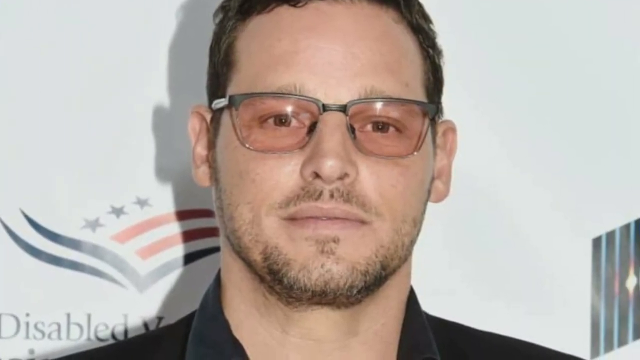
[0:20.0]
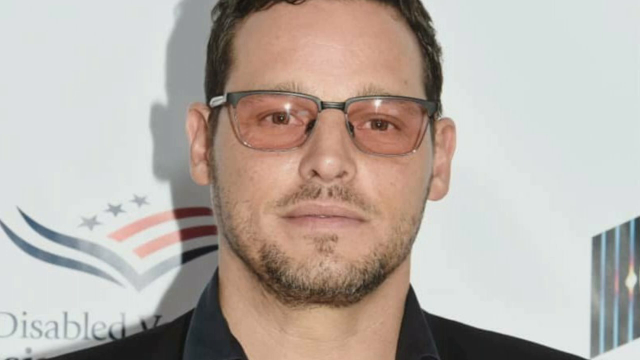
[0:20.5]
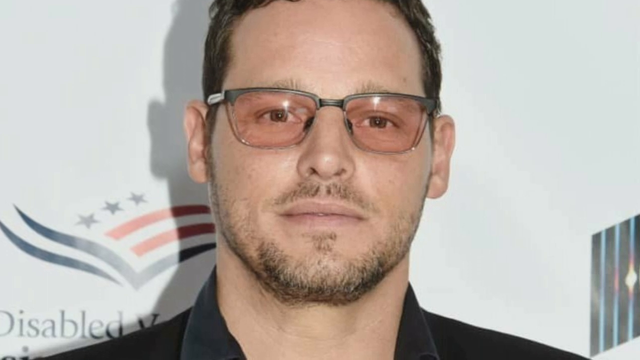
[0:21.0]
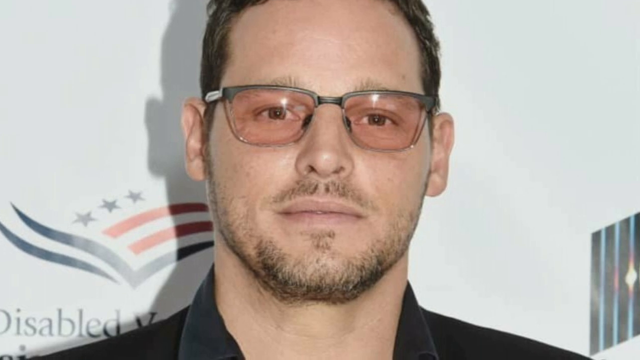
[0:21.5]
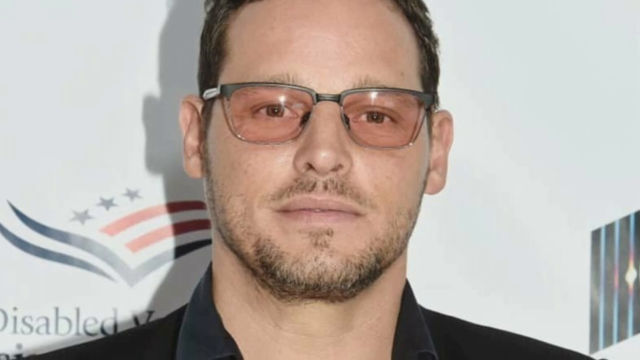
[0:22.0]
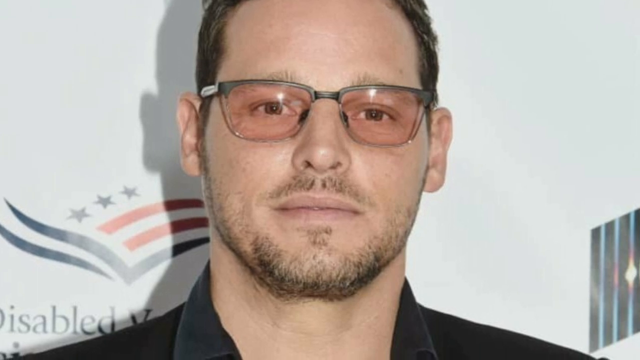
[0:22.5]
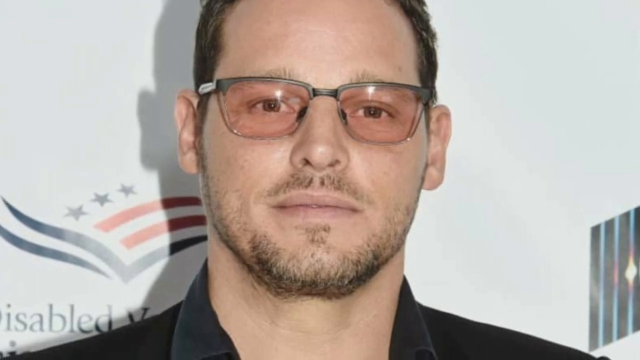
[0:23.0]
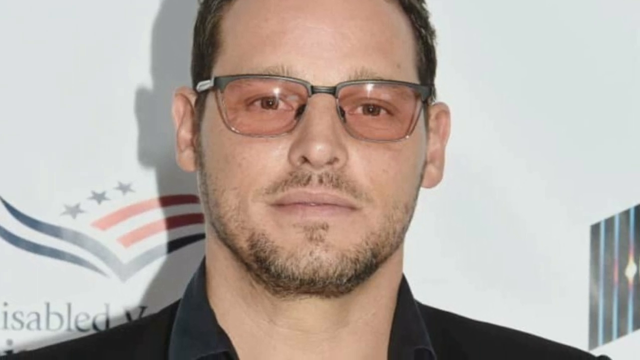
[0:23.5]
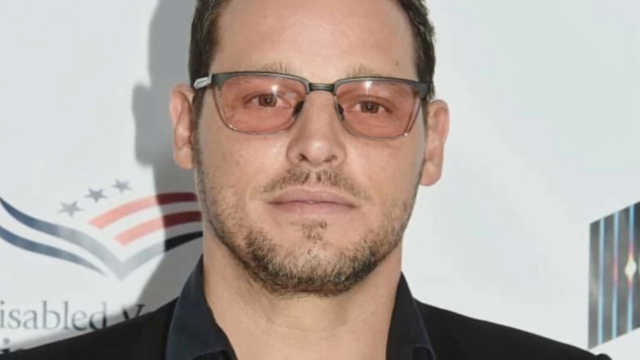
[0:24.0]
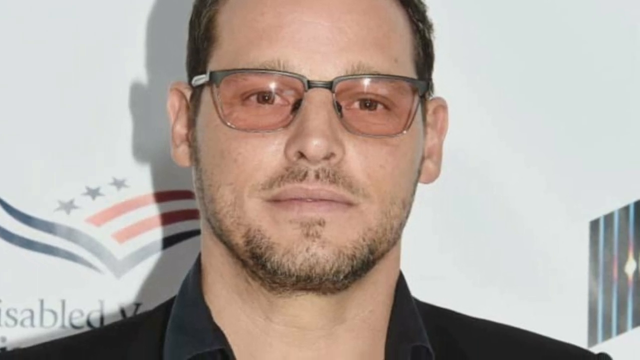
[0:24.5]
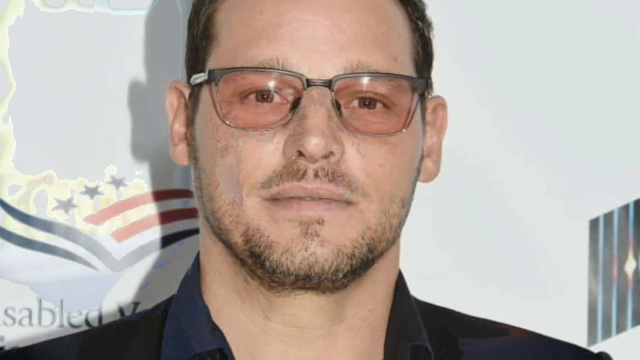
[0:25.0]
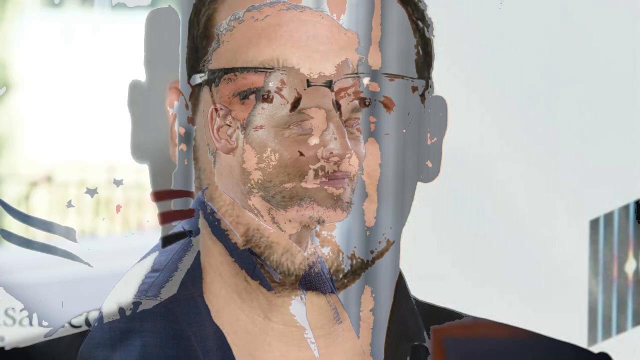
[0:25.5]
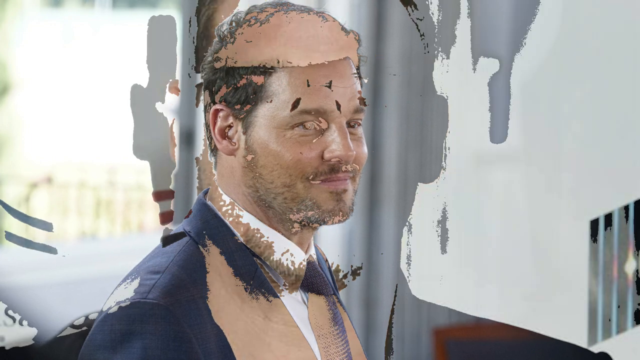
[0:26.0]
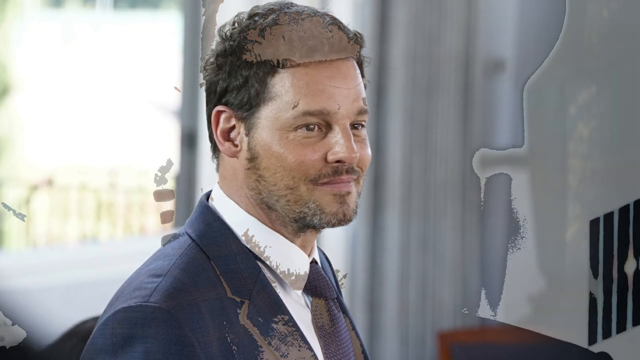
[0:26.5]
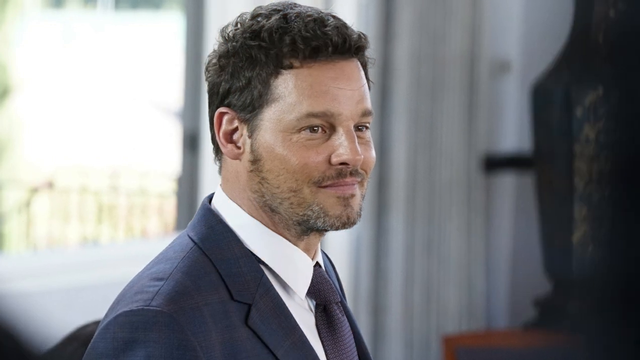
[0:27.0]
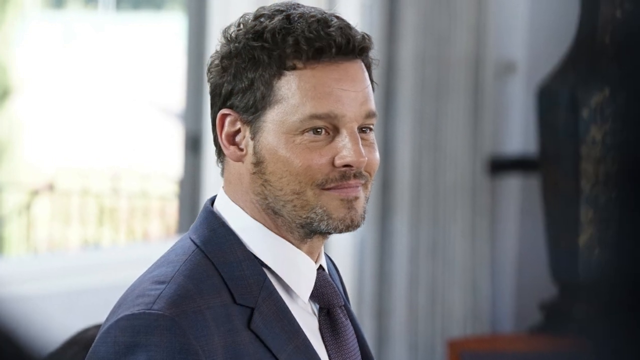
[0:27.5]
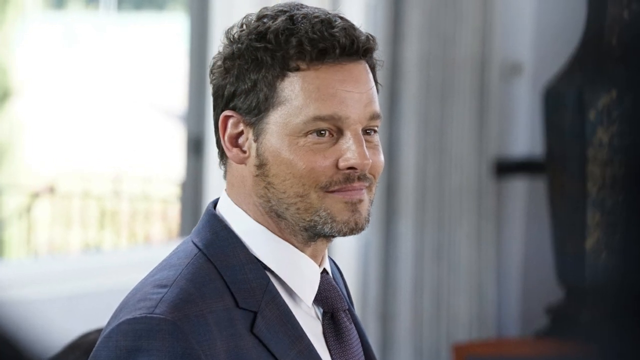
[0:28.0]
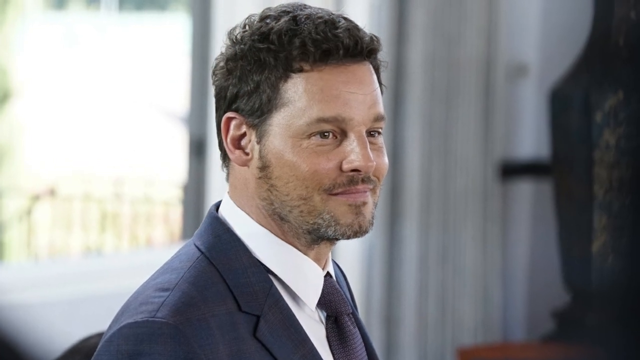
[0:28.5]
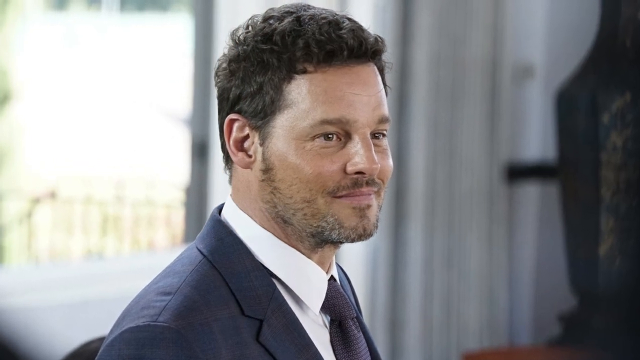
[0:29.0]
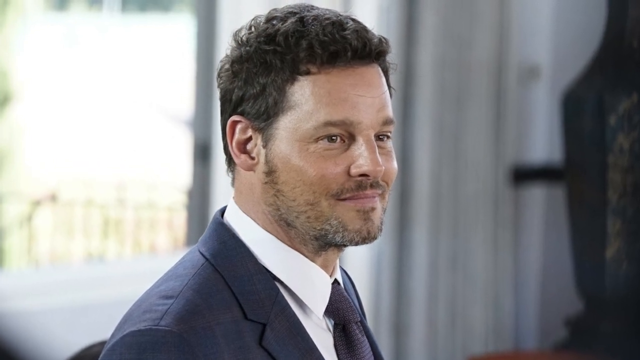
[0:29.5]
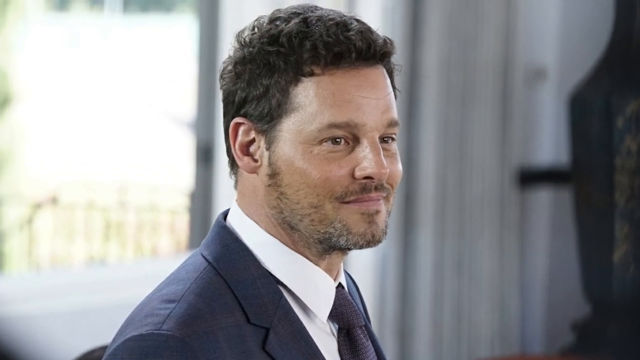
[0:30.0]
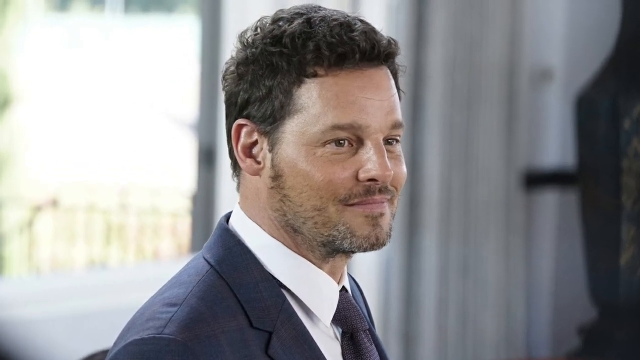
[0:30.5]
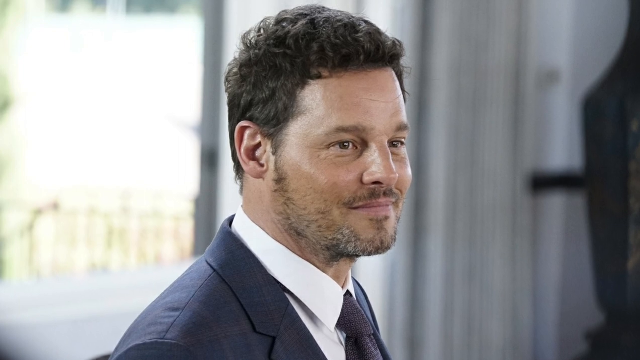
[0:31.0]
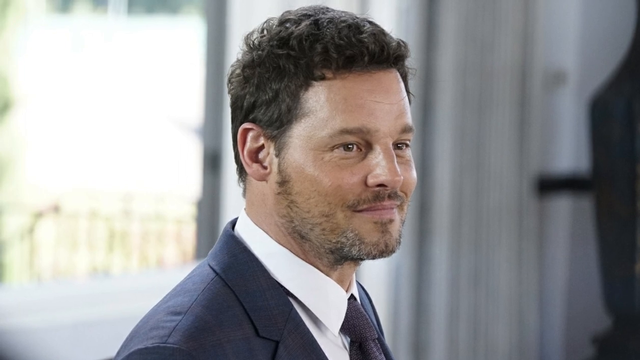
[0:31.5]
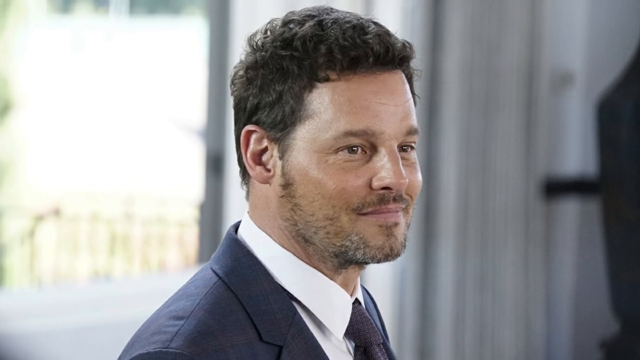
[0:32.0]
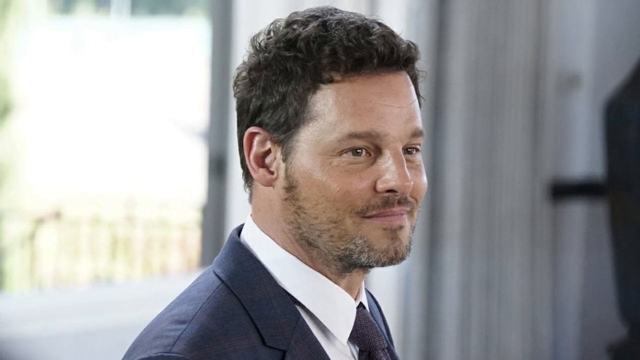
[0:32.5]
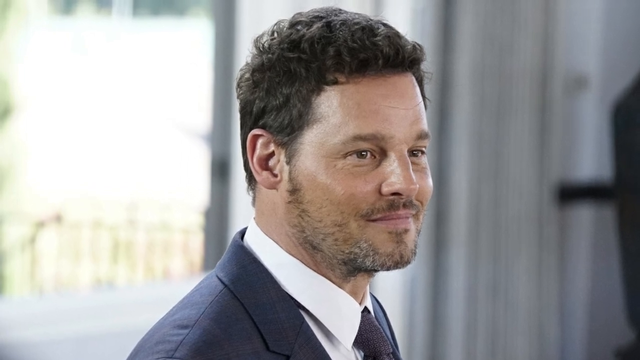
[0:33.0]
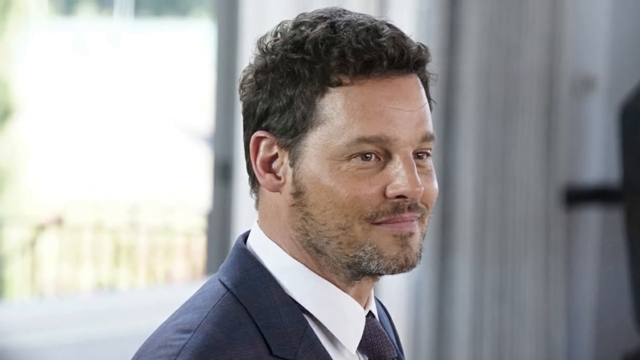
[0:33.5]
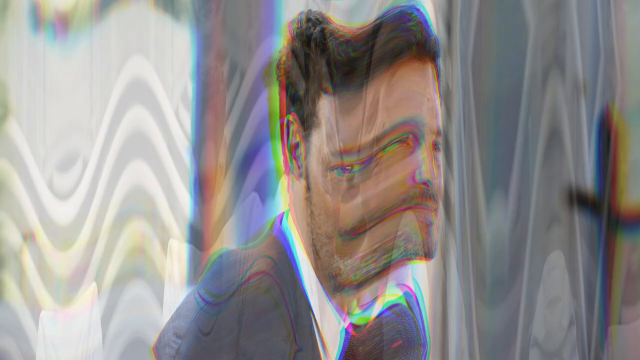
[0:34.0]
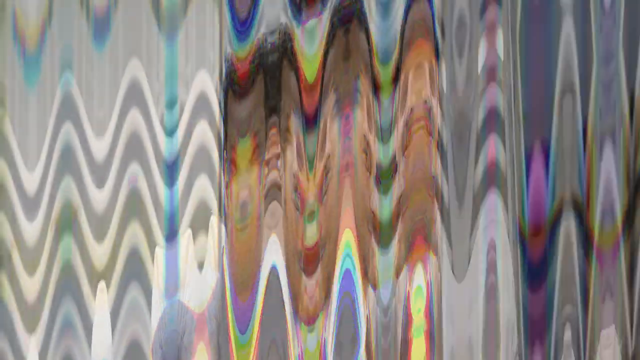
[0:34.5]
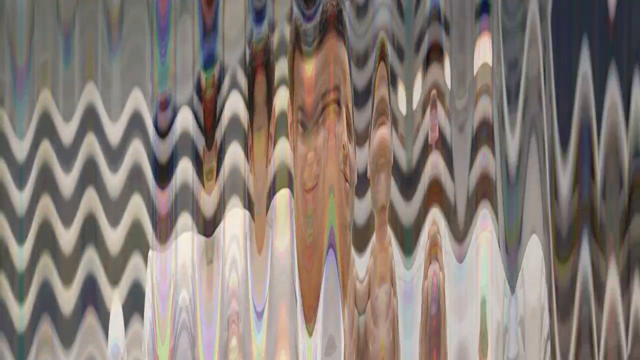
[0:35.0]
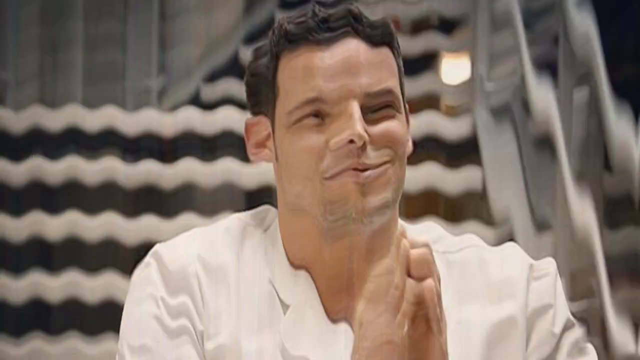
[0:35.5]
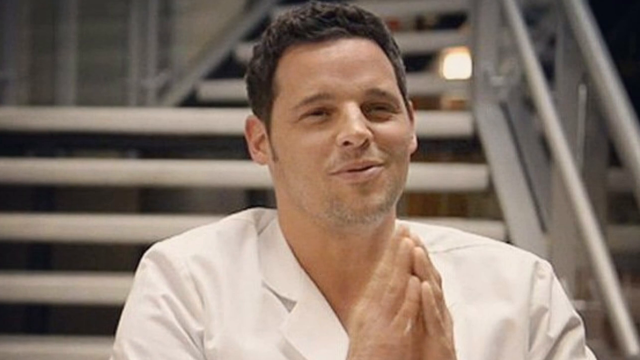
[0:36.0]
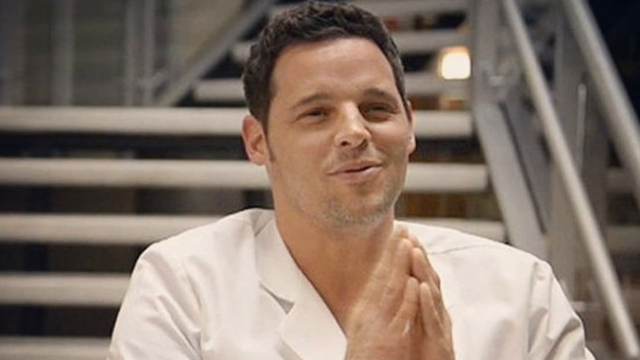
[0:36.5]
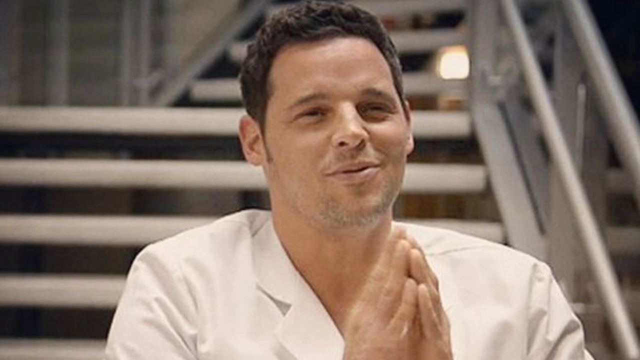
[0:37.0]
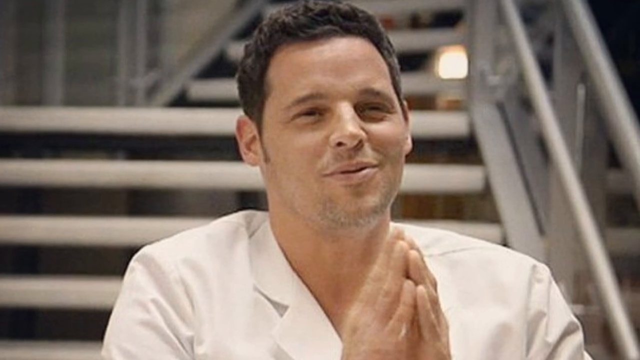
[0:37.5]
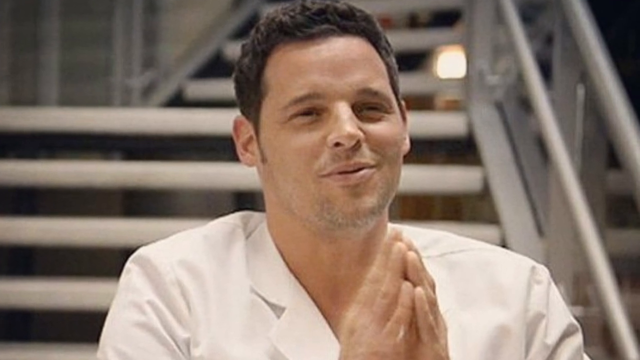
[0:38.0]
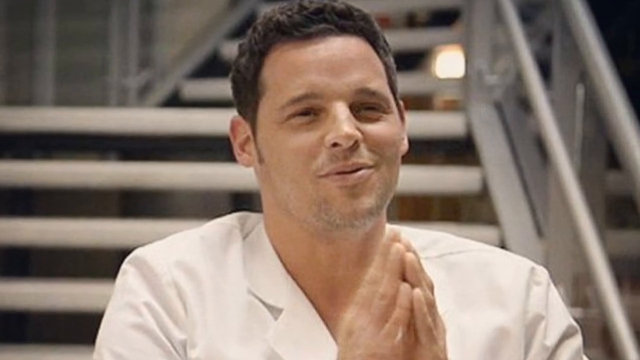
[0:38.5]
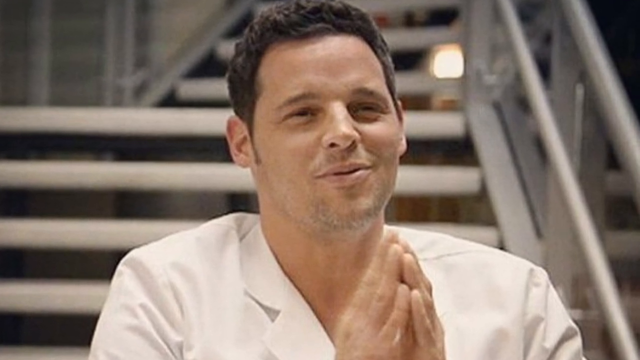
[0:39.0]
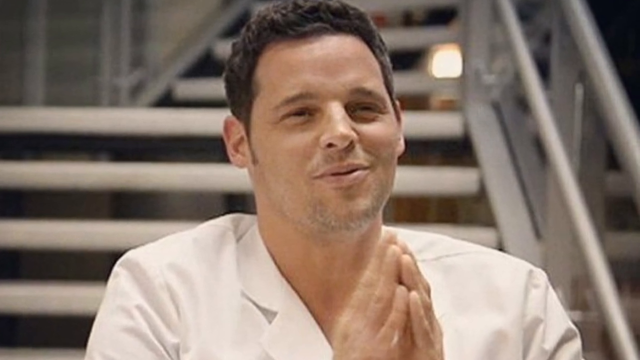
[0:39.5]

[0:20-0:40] A picture shows a man wearing rose-tinted glasses with a dark steel-colored metal frame that only goes along the top of the lenses. He is a white man with short brown hair and a very short trimmed beard, almost like a bit of scruff or a five o'clock shadow. He wears a black shirt and is standing up against a white backdrop with some symbols on it. It is a still image, and the camera slowly pans to the bottom right. The video switches to another image of the same man, with short brown hair and a bit more scruff in his beard with a little bit of greying in it. He wears a blue suit with a white shirt and a blue tie, and the camera pans to the upper left-hand corner. The background is all blurred, but there appears to be a window on the left side and some sort of drapes on the right. Next comes another image of the same man, with short brown hair and a grey beard, wearing a white lab coat with a white shirt. He is sitting on top of some steel stairs that are white in color, with his hands clasped together almost like he's praying.